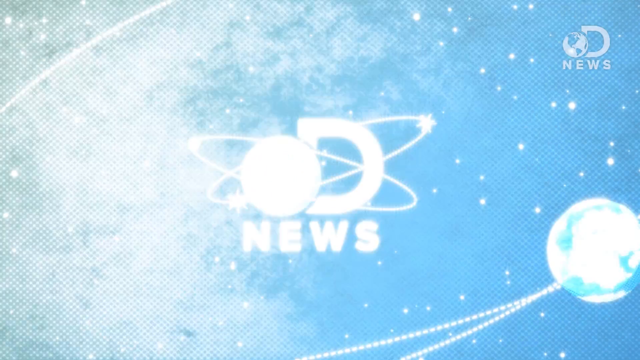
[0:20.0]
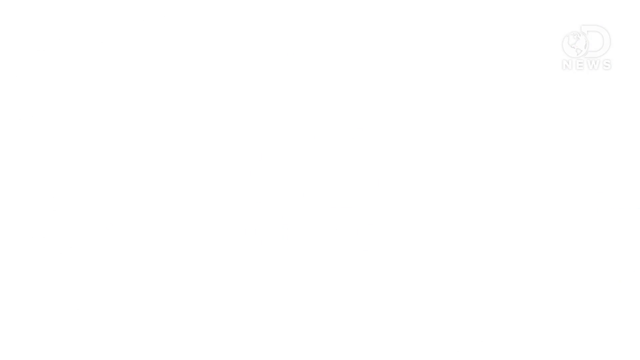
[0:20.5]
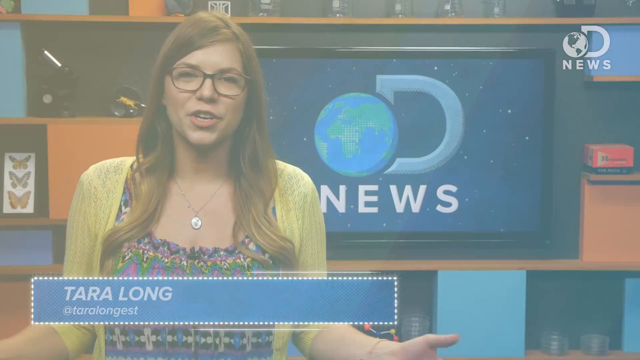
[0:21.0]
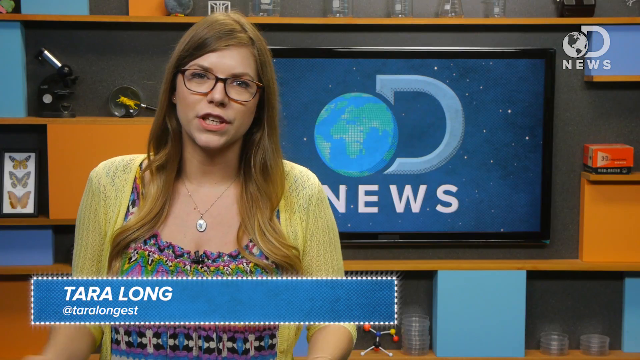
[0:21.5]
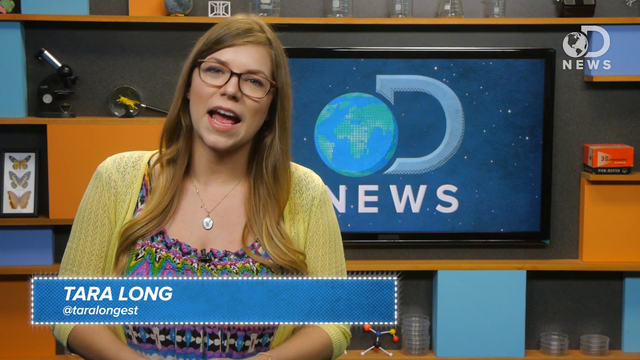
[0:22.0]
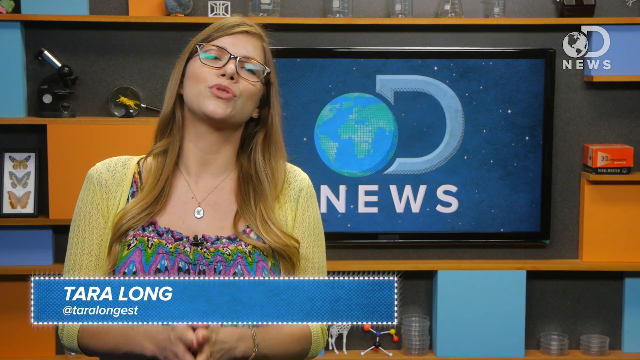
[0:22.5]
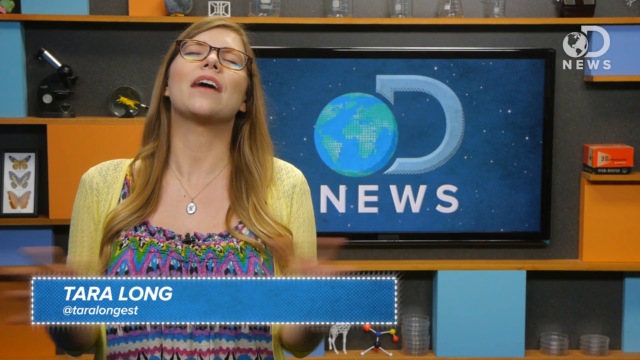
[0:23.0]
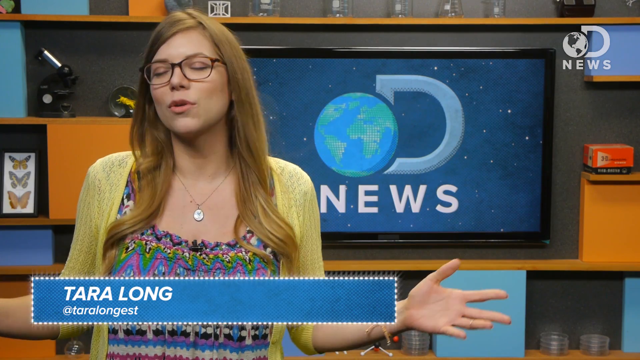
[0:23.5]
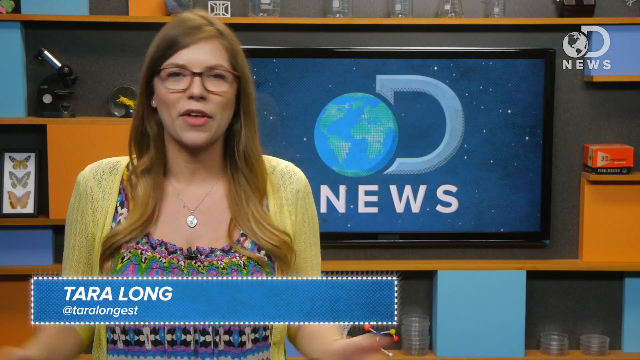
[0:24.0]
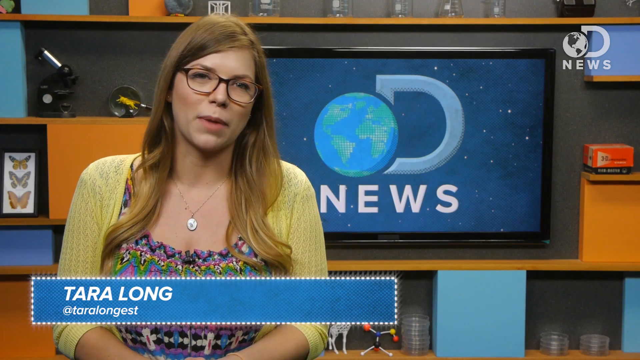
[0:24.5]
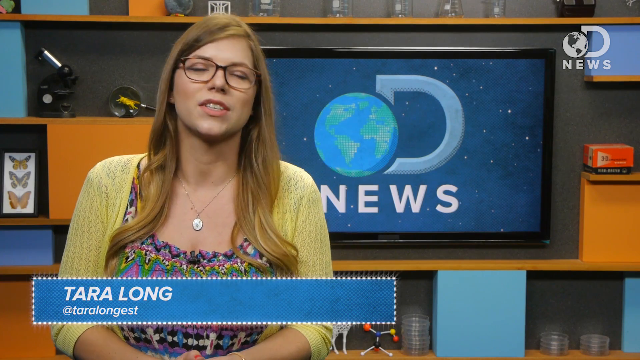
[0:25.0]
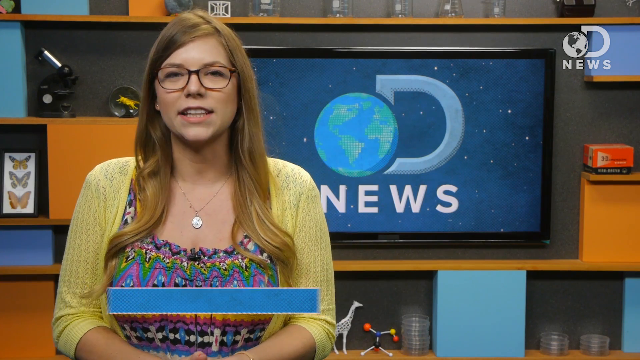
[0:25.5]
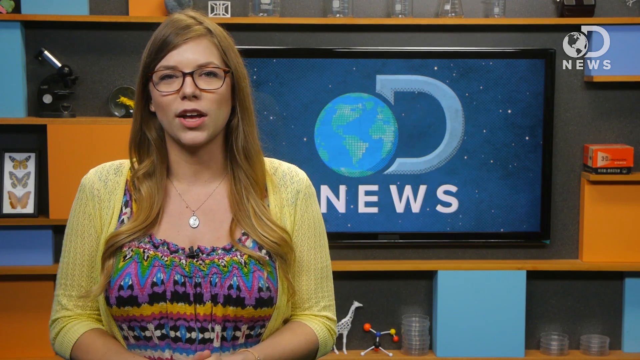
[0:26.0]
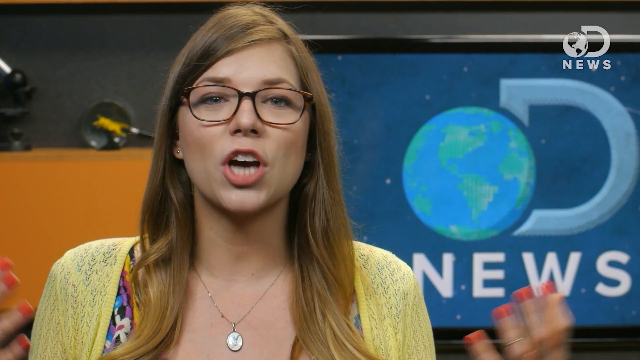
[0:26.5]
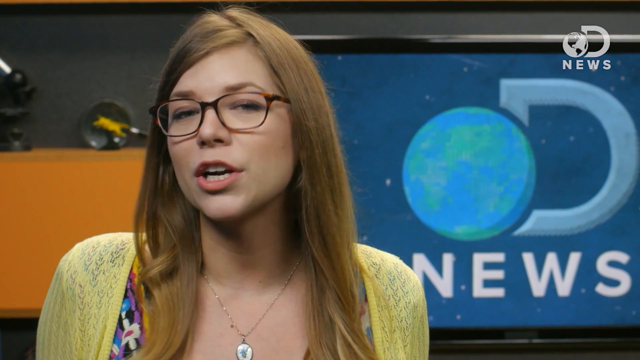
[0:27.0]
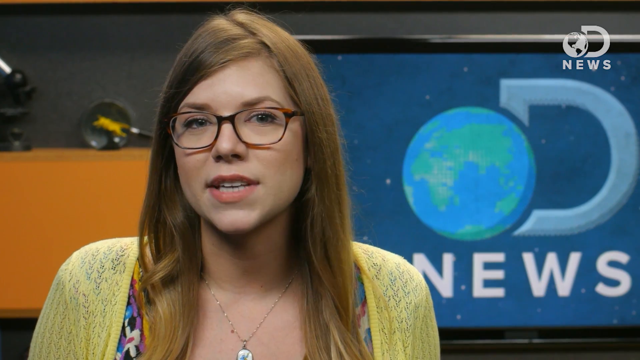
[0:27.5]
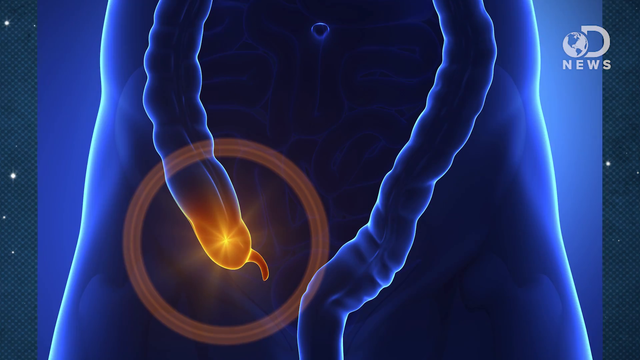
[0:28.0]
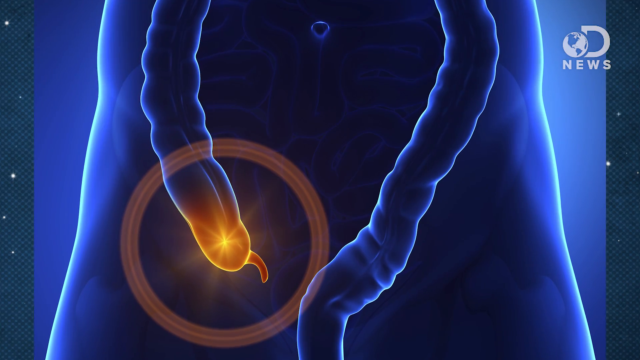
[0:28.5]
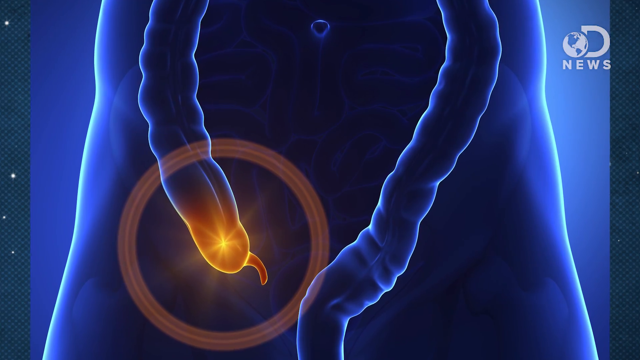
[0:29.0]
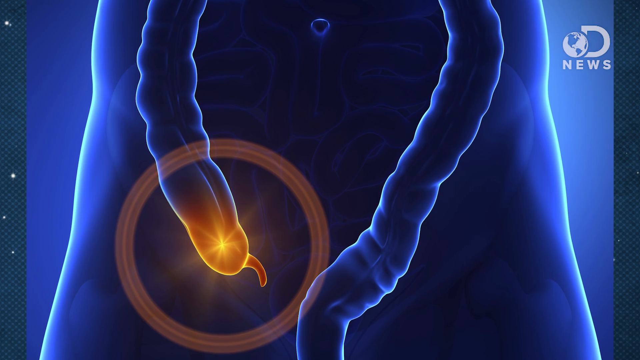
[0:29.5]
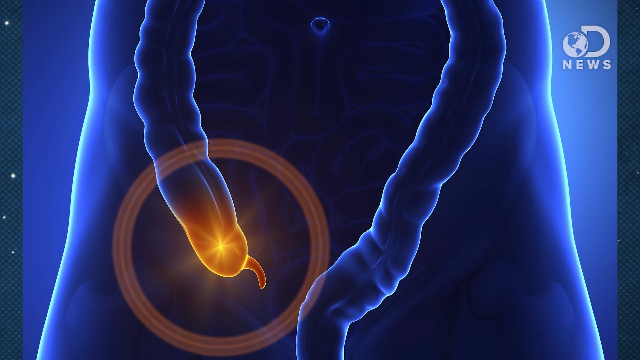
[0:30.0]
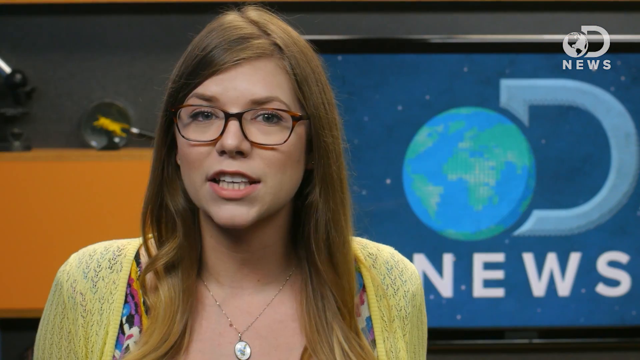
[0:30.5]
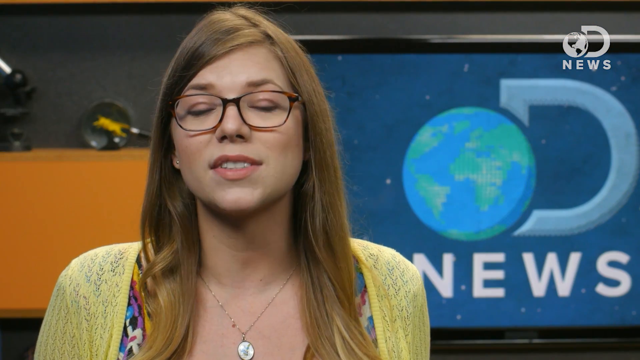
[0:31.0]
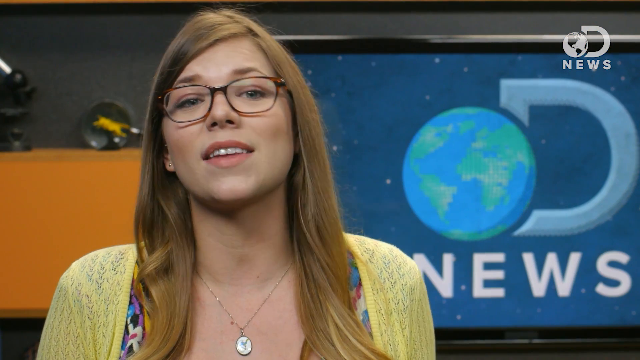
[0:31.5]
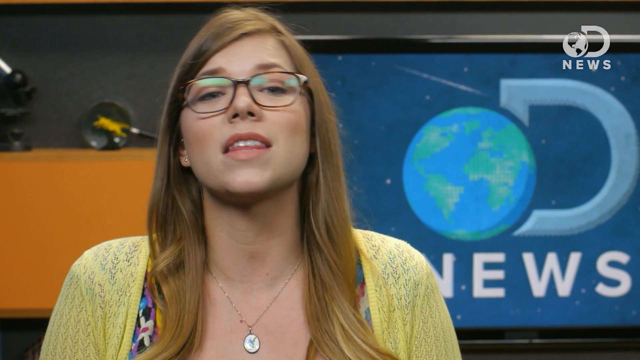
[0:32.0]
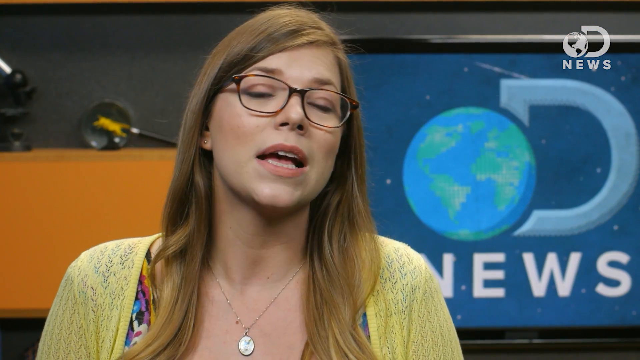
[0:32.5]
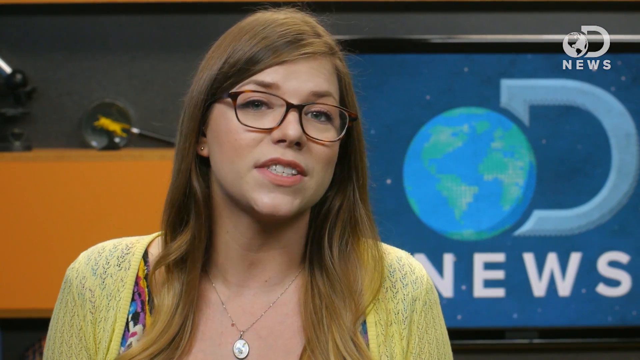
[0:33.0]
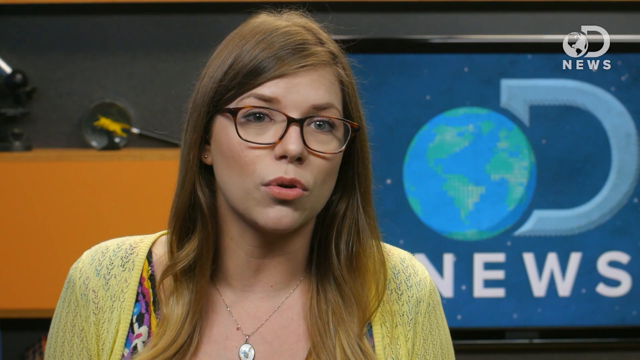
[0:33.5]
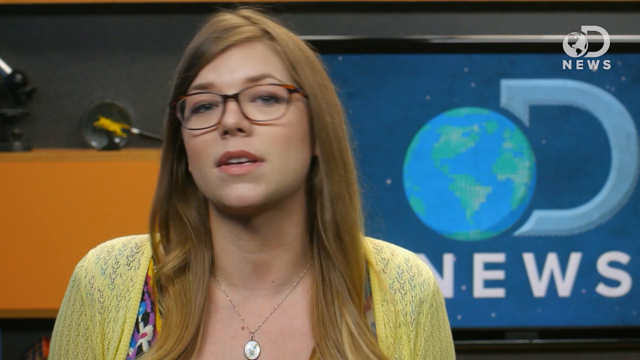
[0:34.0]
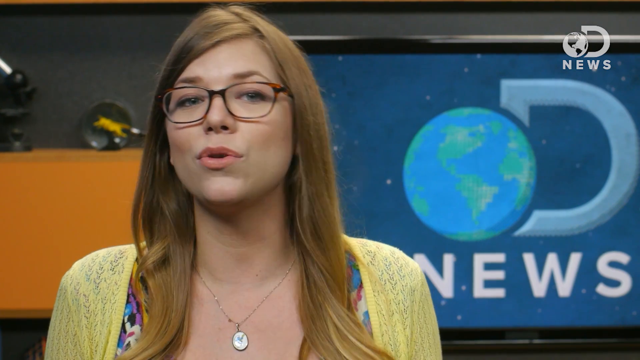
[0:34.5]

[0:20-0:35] A speaker named Tara Long presents a topic that includes the appendix. The video zooms in on a picture showing the intestines, then zeroes in on the area of the large intestine where a tiny appendix sticks out on the side. She smiles and talks with her hands. Kind of an orange light shines on the area of the appendix, lighting it up, and an orange circle goes around the area of the large intestine with the tip of the appendix. The appendix is much smaller than the large intestine. The person's belly button is visible; the picture is kind of dark, but the orange lights up that area.